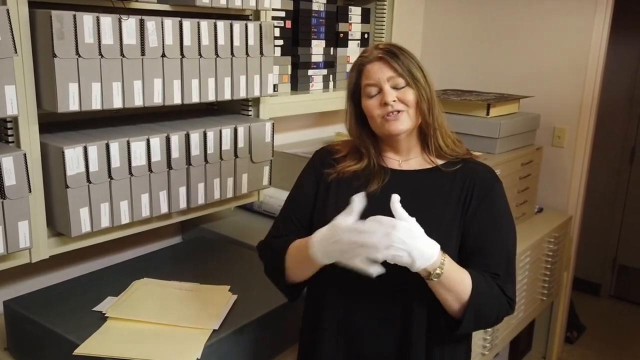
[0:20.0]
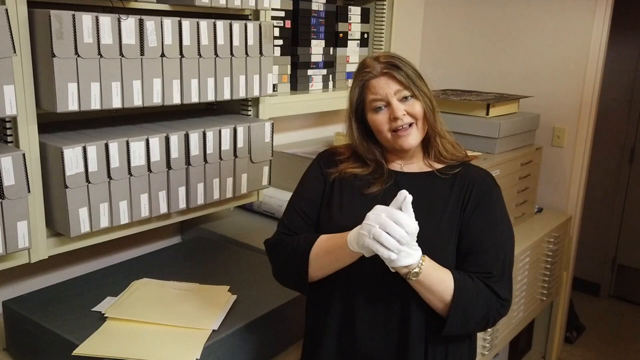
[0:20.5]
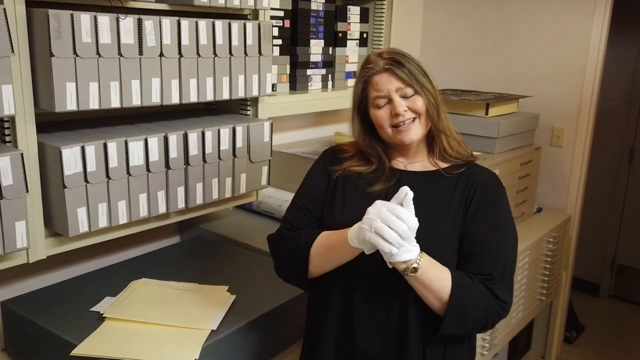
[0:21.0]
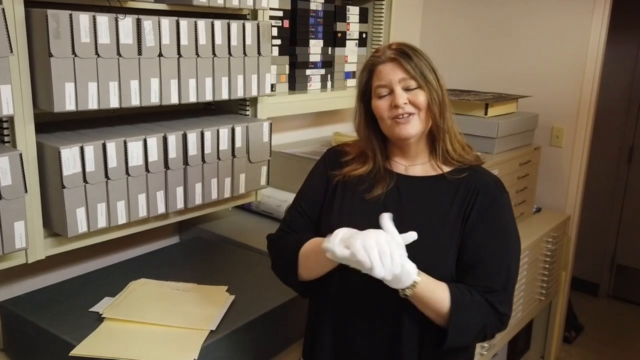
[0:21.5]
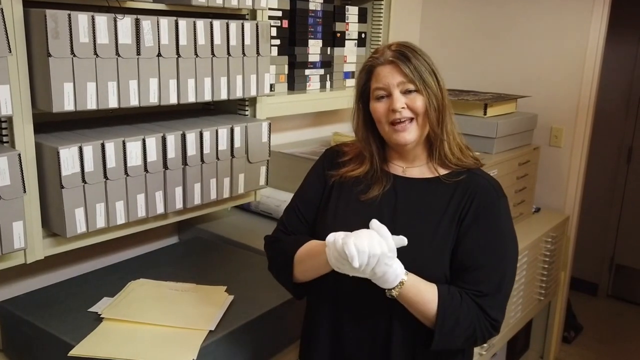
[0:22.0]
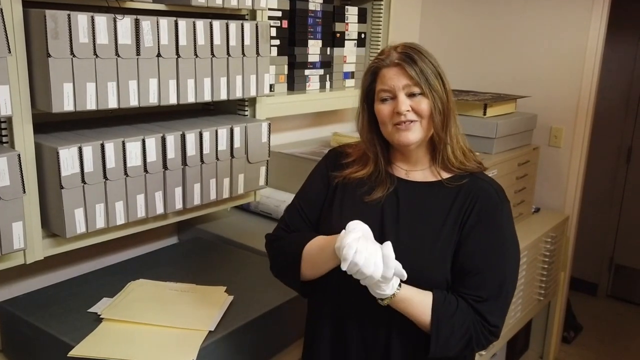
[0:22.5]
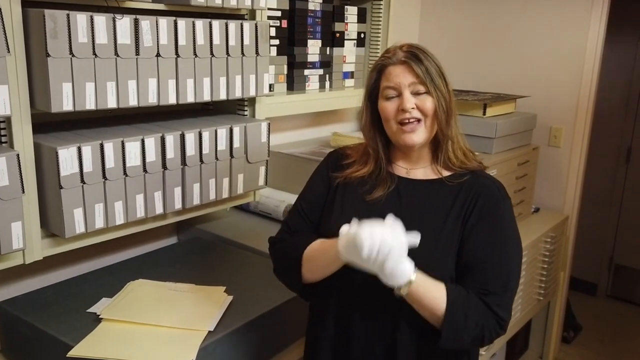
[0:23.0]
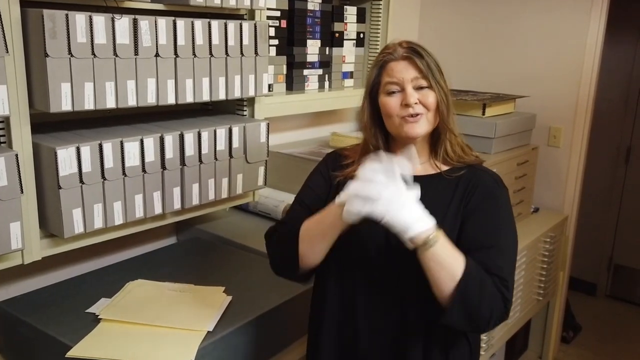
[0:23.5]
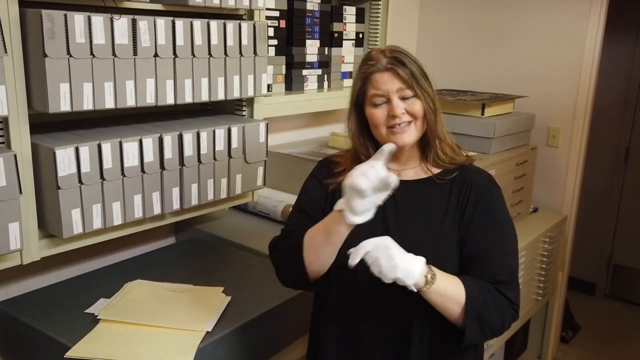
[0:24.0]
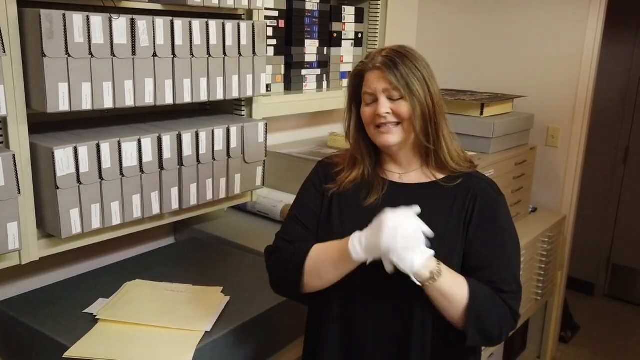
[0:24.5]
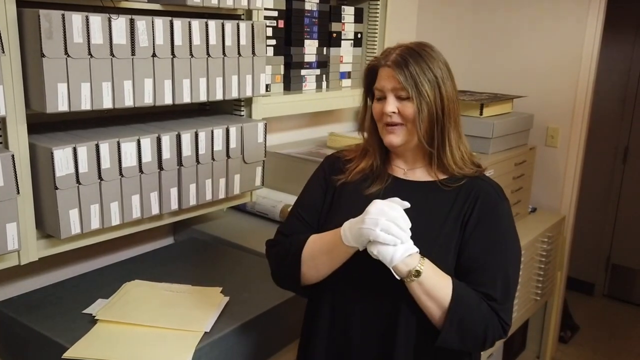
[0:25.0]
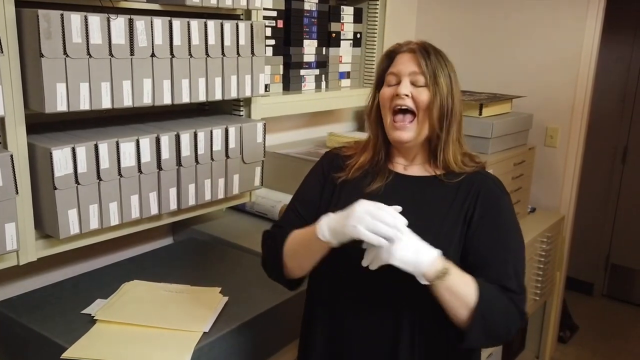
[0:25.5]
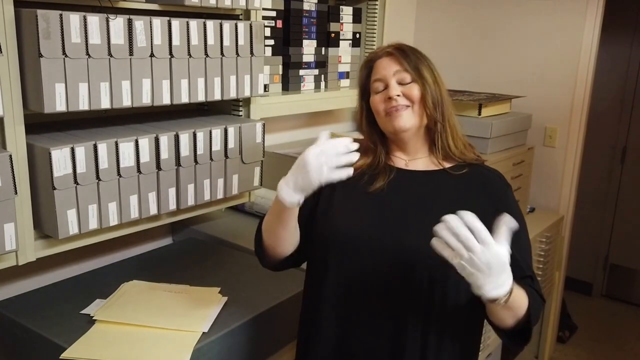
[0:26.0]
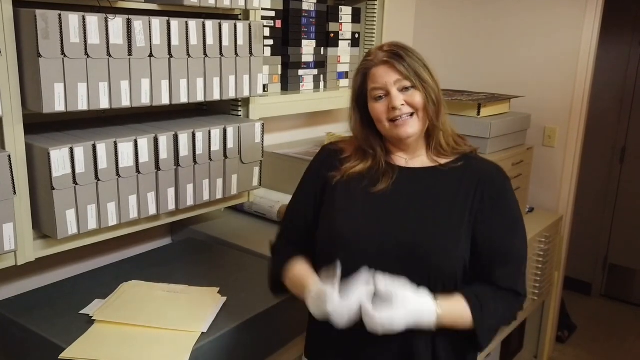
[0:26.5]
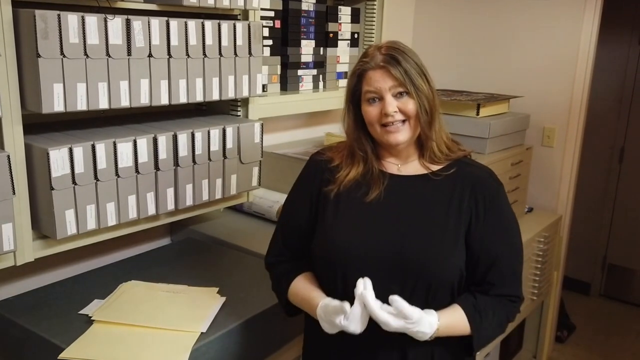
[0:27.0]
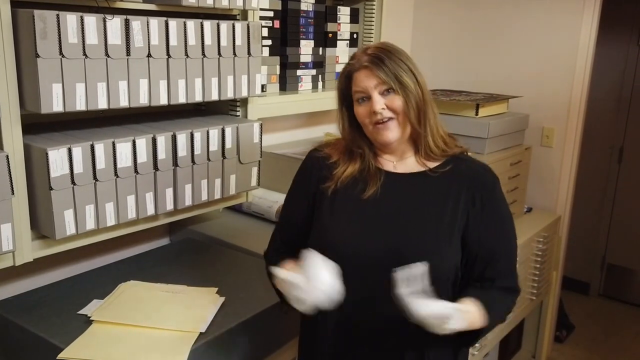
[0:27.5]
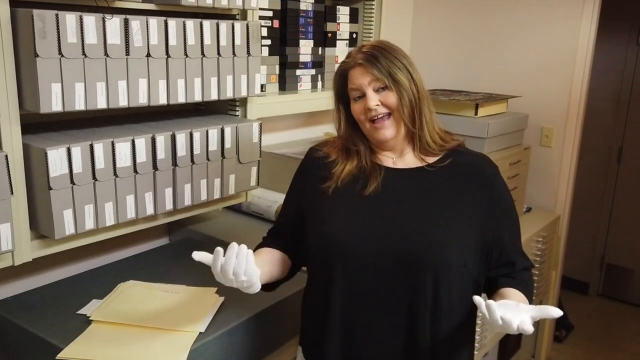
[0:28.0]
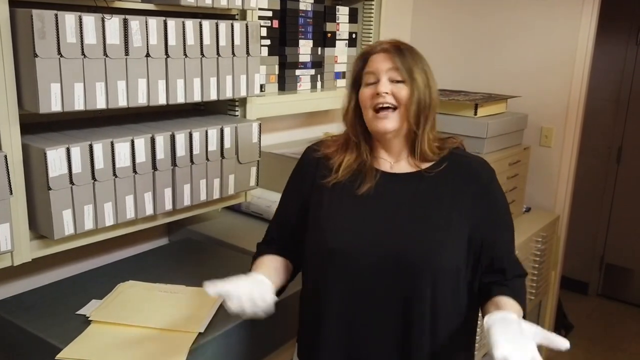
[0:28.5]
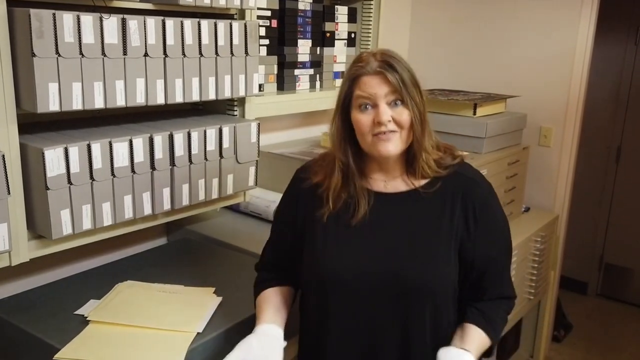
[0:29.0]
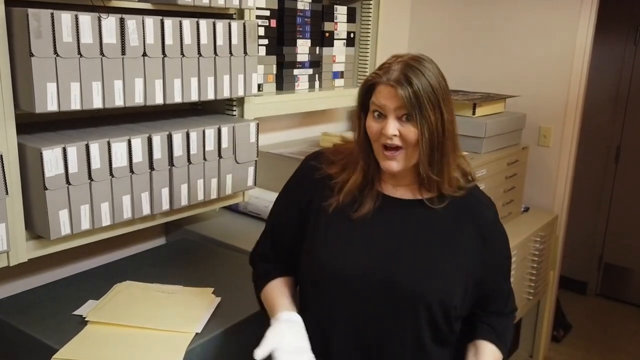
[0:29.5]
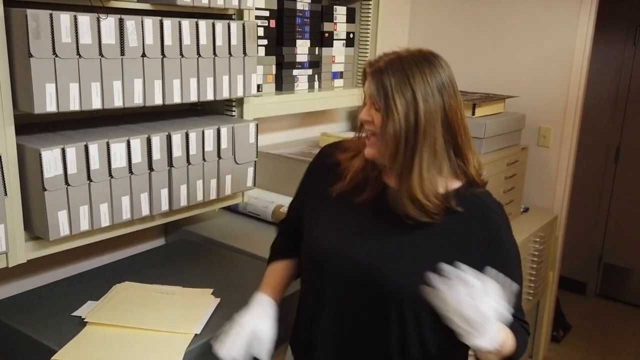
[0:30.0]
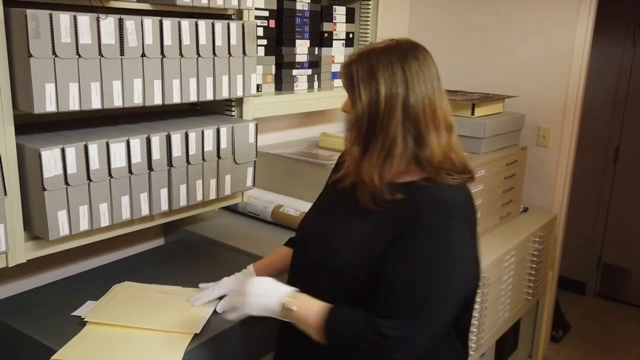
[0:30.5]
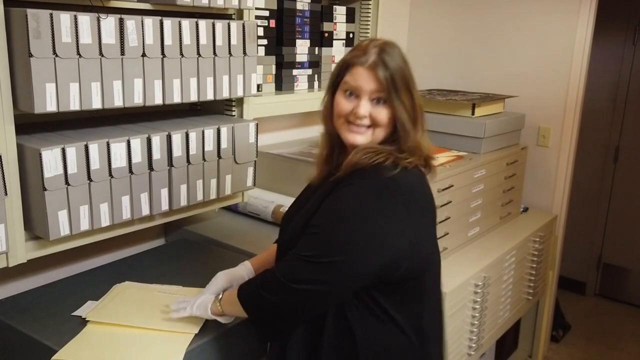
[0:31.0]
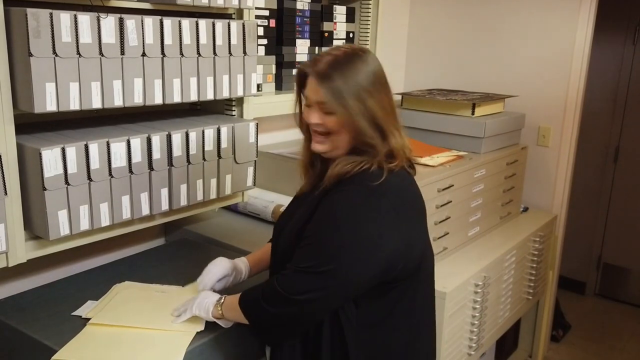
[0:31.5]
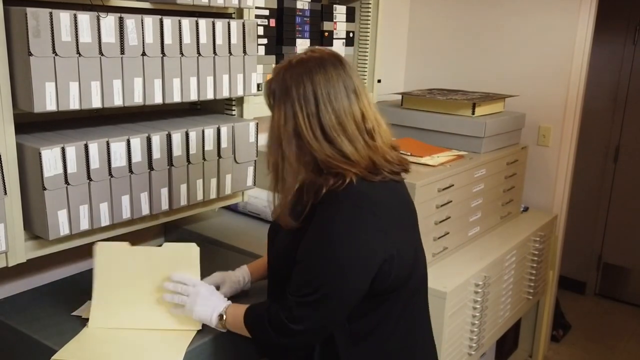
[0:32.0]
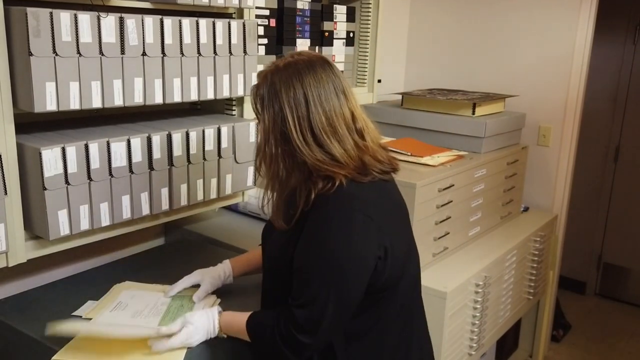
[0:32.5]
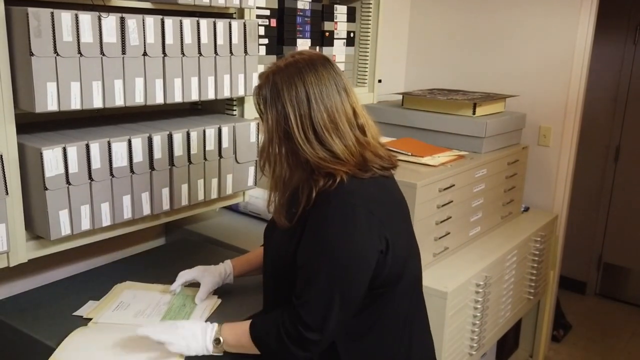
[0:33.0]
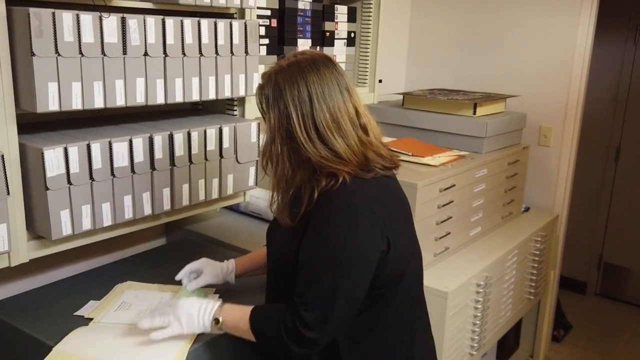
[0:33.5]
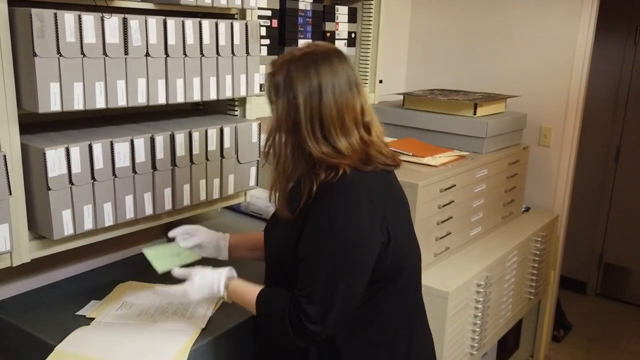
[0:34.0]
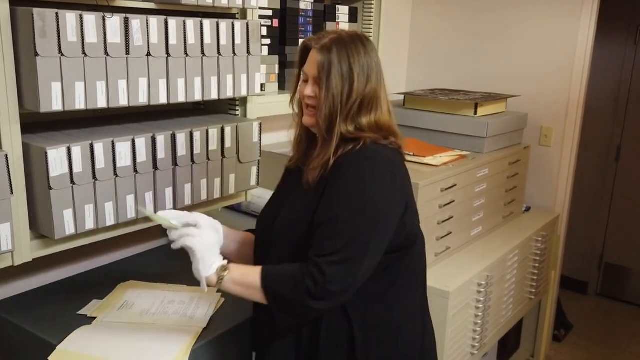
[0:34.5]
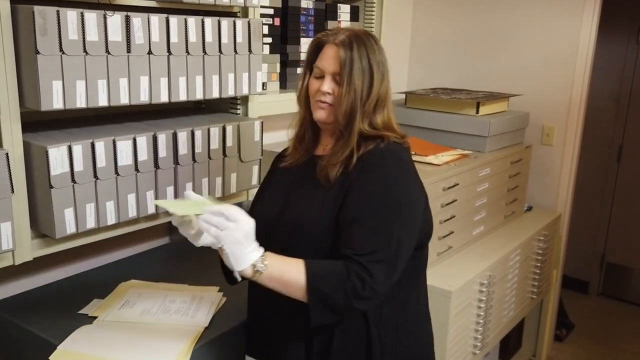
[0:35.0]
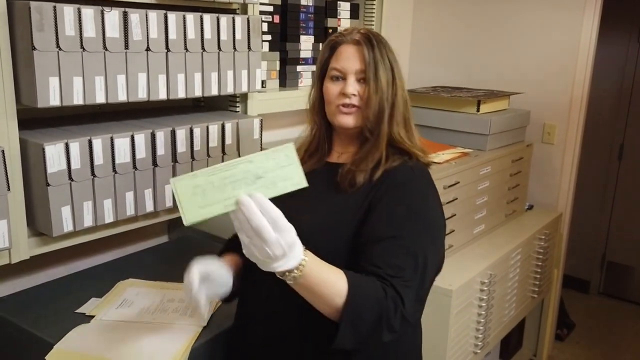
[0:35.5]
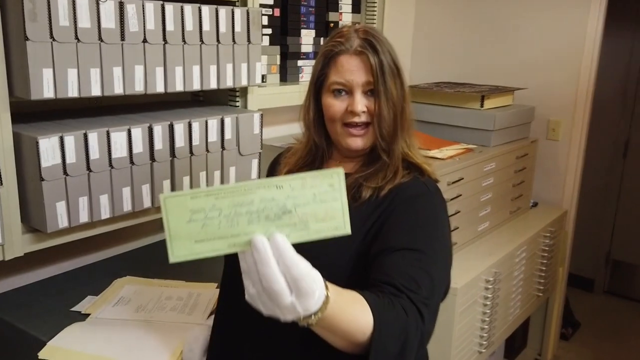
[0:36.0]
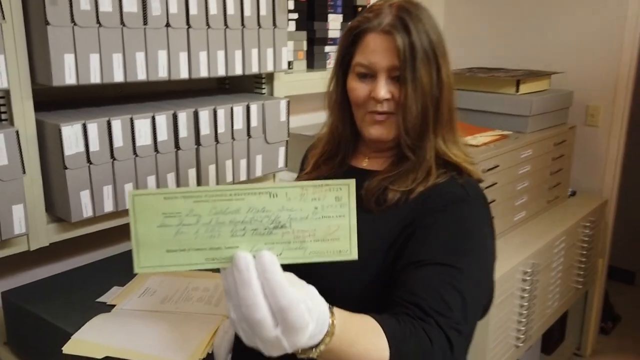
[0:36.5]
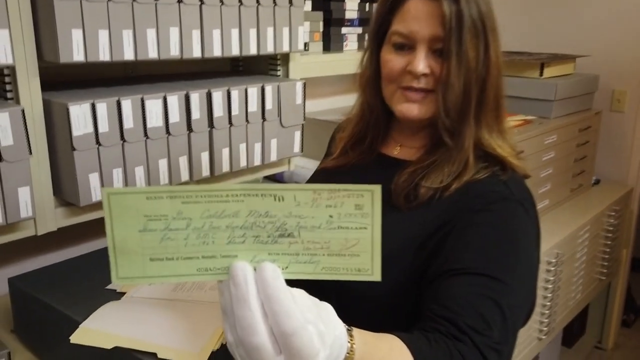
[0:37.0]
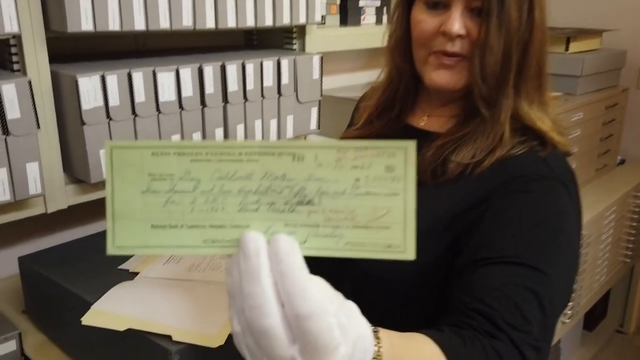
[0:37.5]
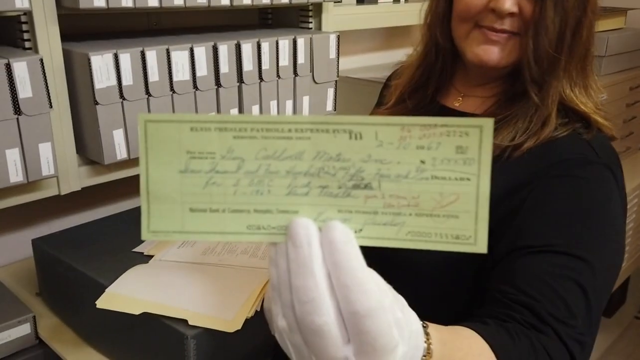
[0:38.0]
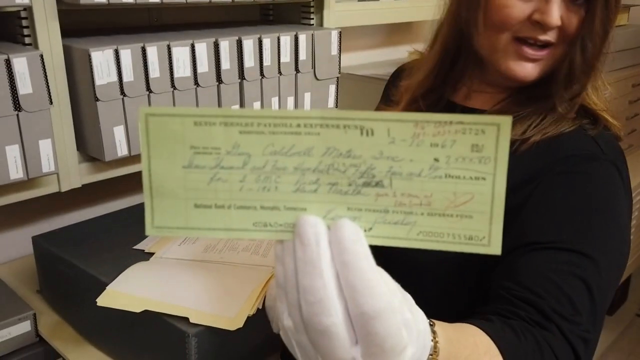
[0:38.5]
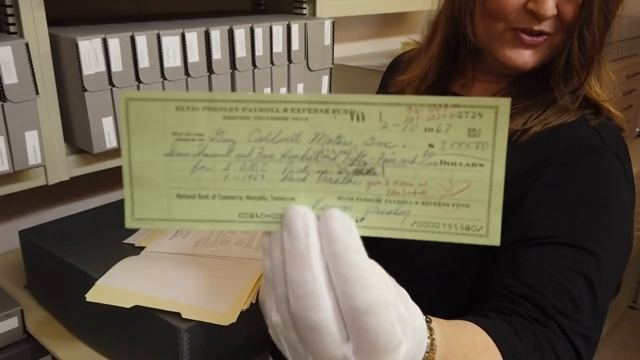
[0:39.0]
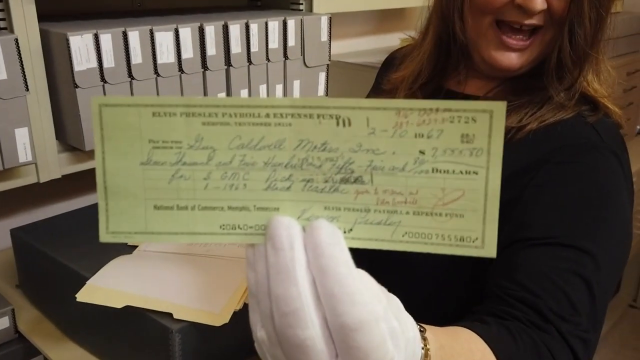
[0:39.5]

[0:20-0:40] The woman, who has brown shoulder-length hair, wears a black top, white gloves and a watch on her left wrist. She speaks into the camera with her hands somewhat cupped in front of her, occasionally pointing at the camera and bringing her hands down by her waist. She then goes to the folder she was holding earlier, opens it and picks up what looks like a gray card, apparently a check. She holds it very close to the camera, almost as if to show what is on it, though the amount and the payee cannot be made out.